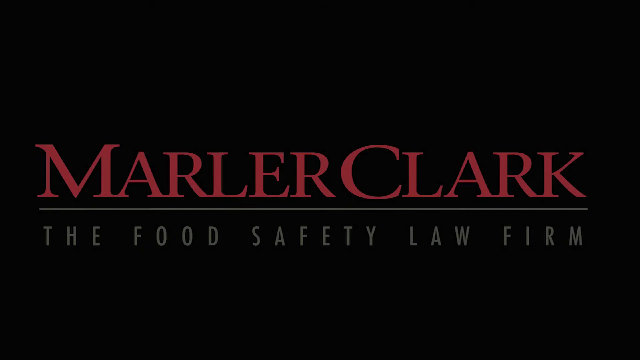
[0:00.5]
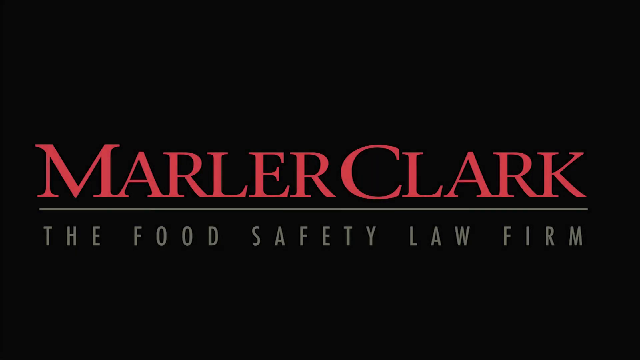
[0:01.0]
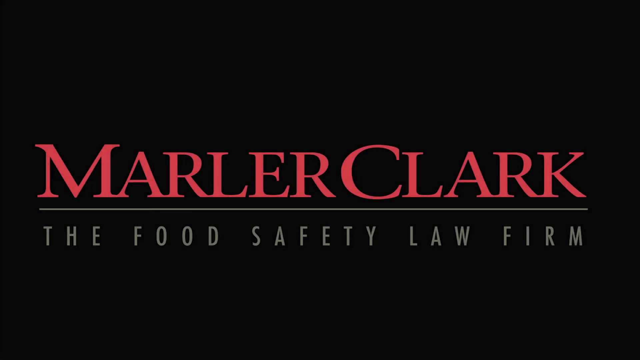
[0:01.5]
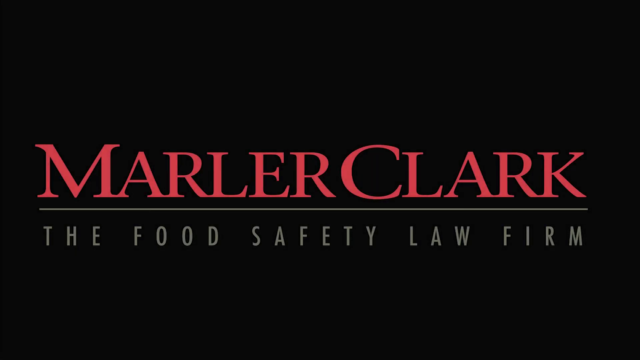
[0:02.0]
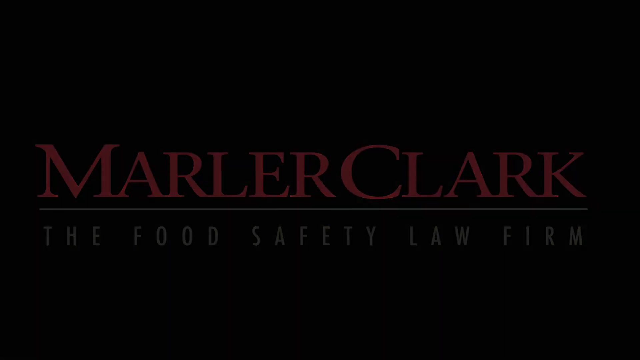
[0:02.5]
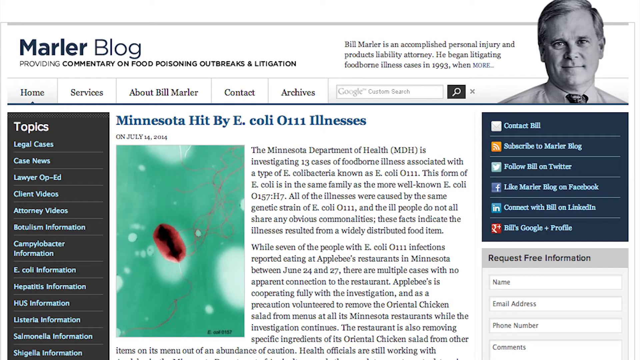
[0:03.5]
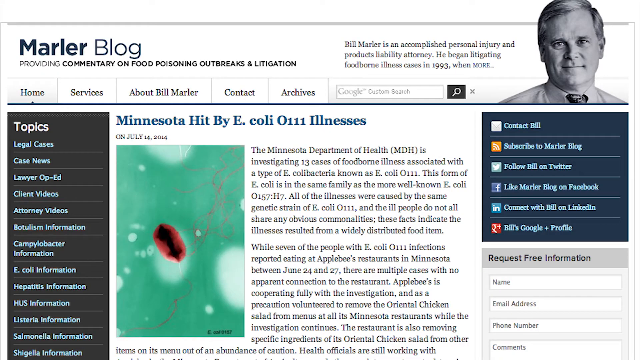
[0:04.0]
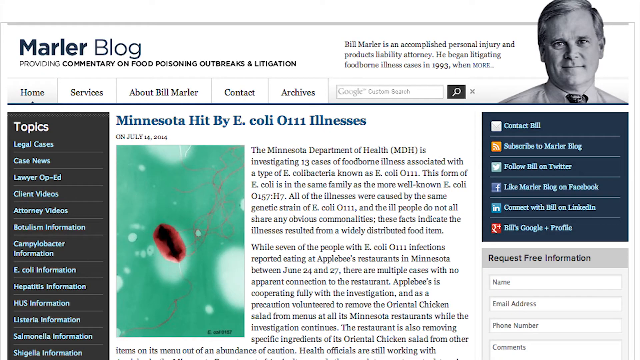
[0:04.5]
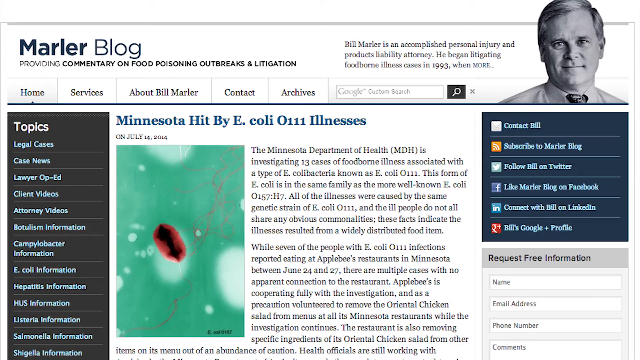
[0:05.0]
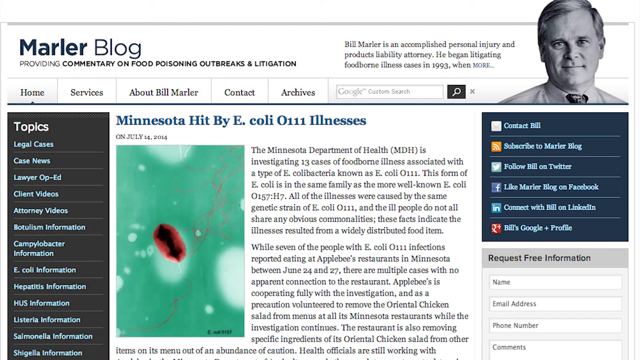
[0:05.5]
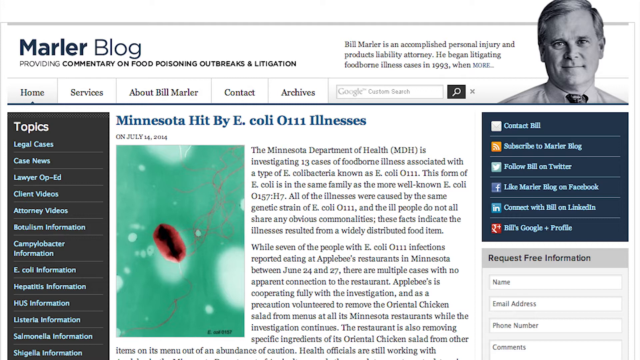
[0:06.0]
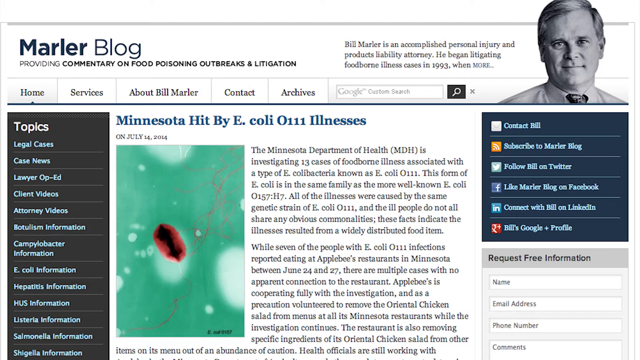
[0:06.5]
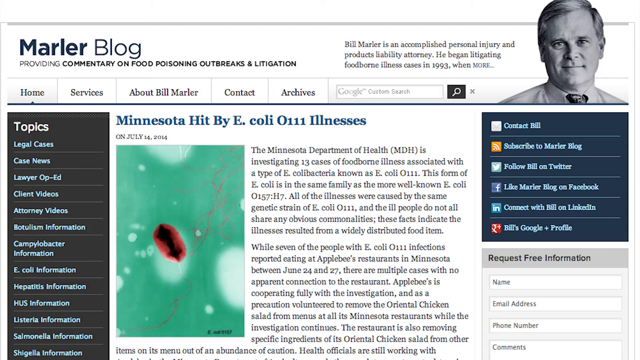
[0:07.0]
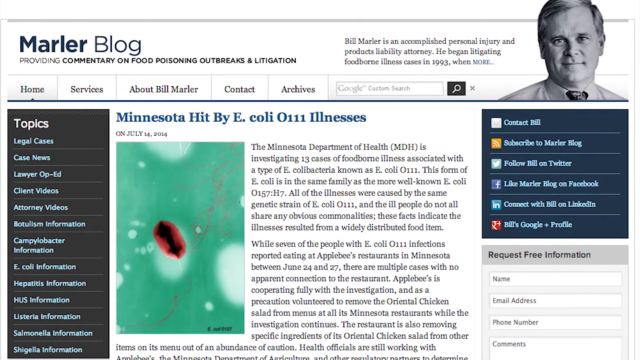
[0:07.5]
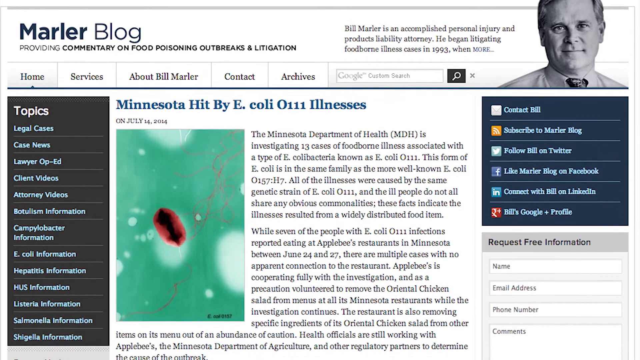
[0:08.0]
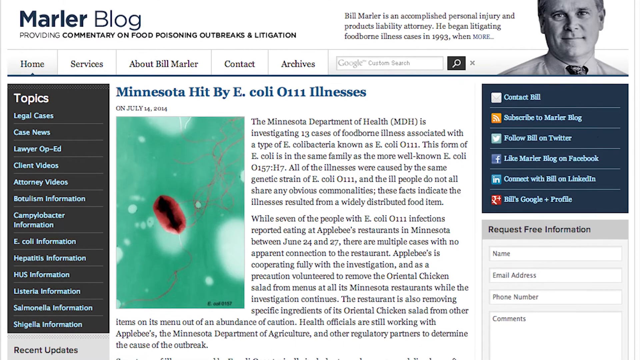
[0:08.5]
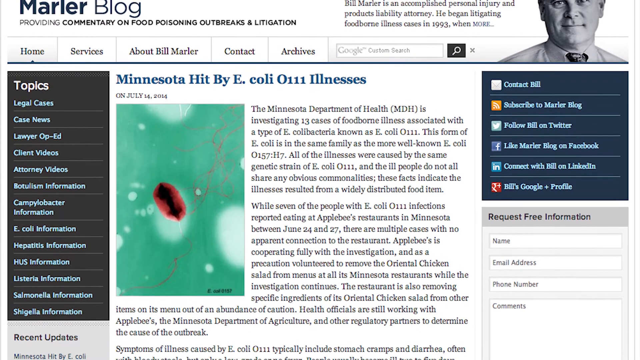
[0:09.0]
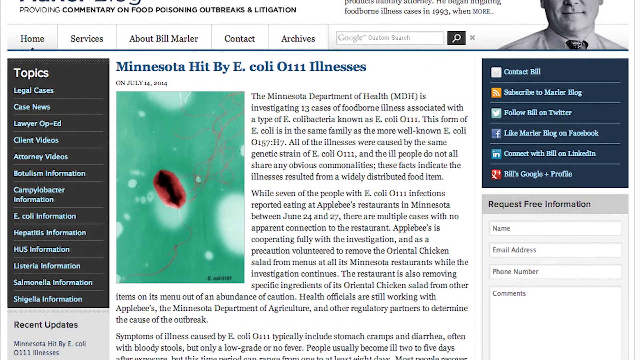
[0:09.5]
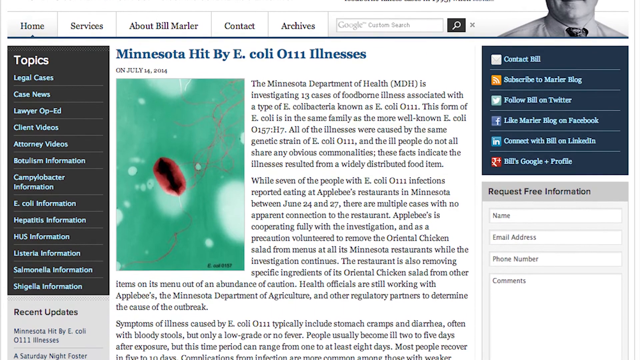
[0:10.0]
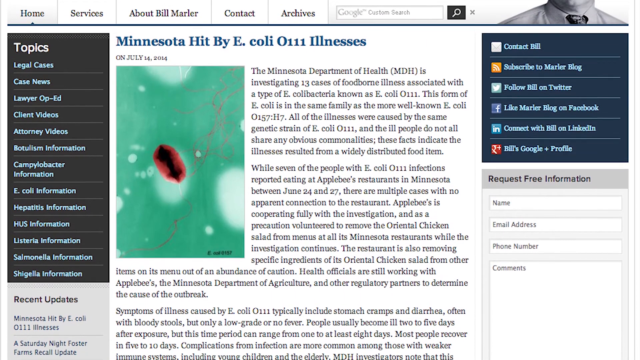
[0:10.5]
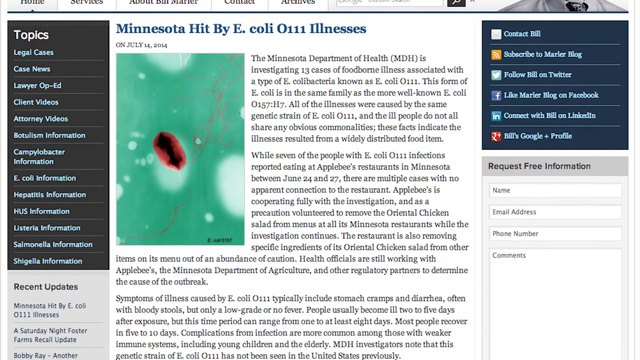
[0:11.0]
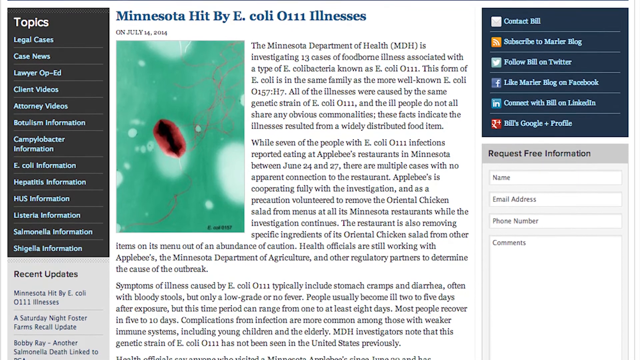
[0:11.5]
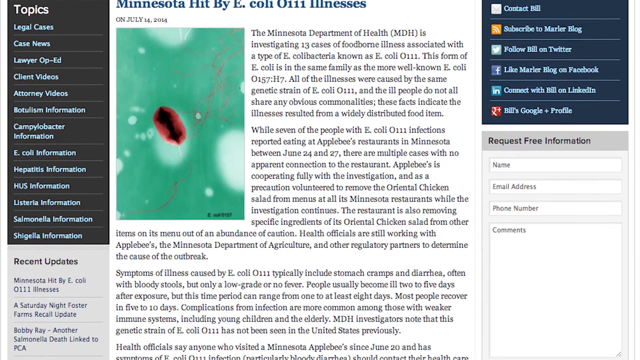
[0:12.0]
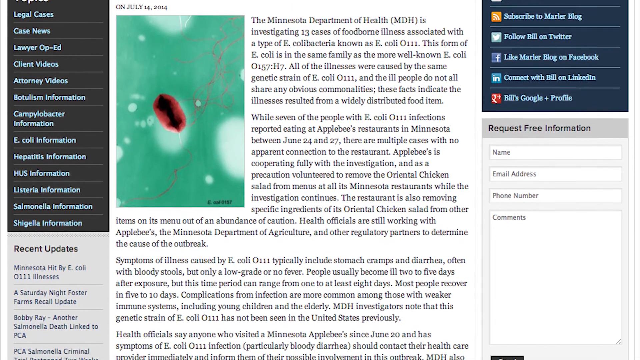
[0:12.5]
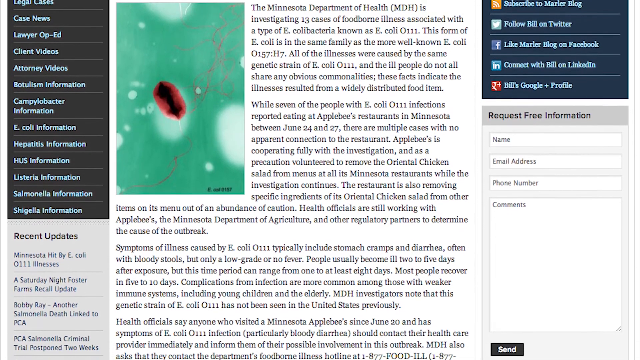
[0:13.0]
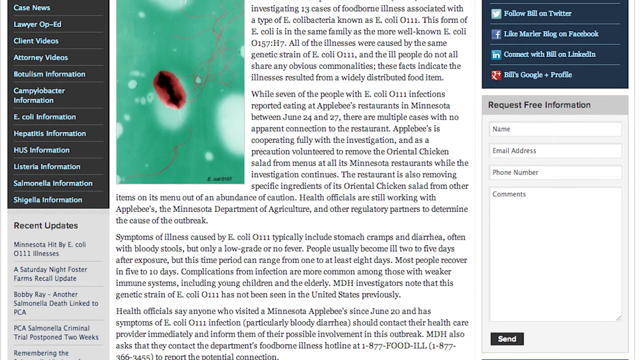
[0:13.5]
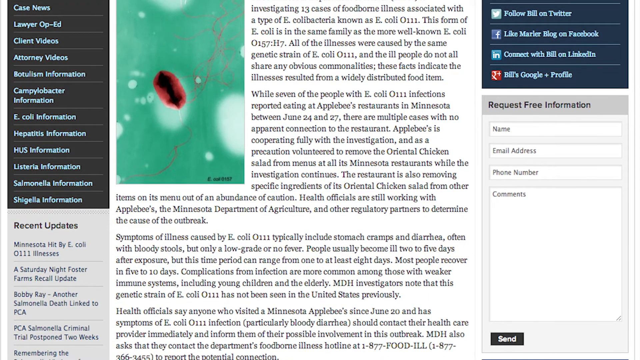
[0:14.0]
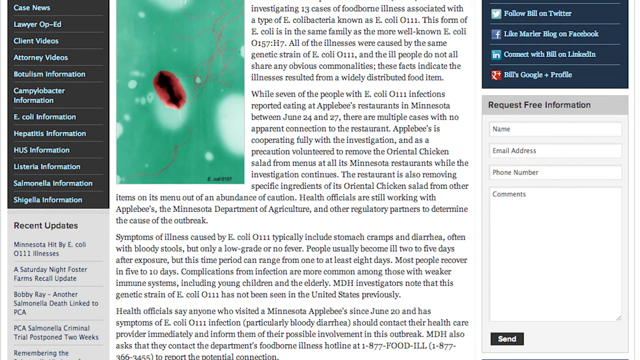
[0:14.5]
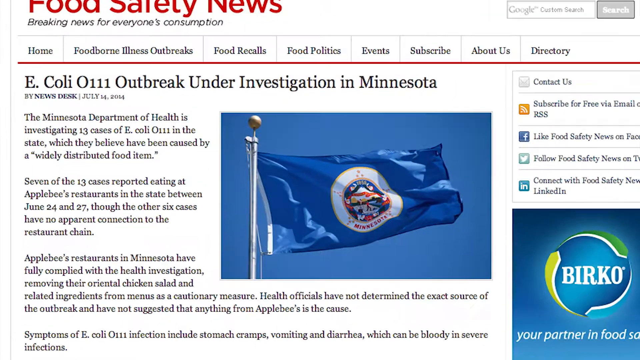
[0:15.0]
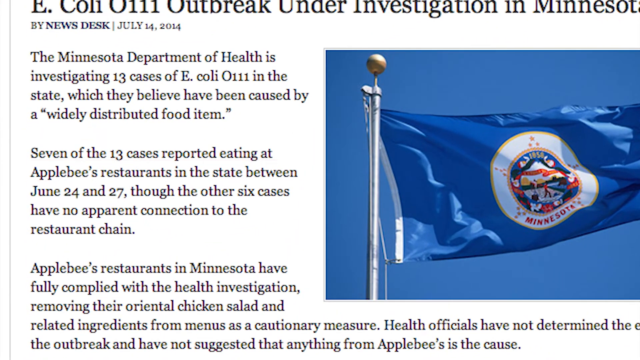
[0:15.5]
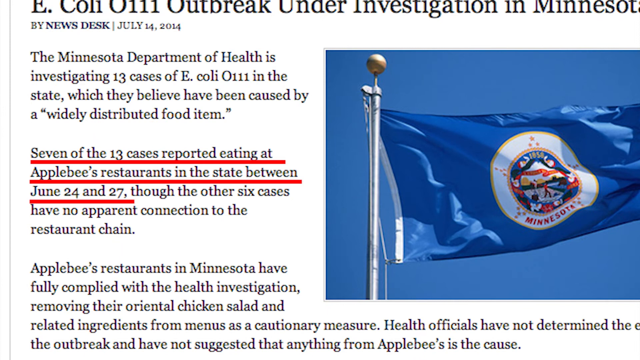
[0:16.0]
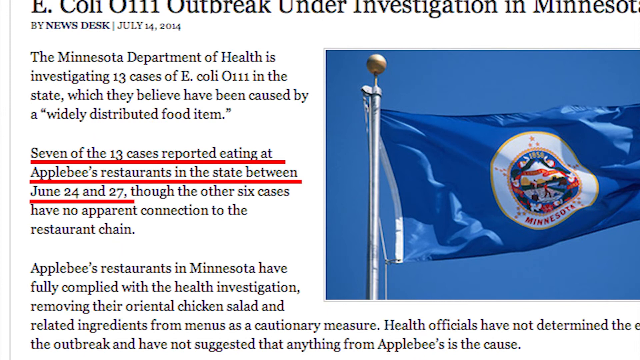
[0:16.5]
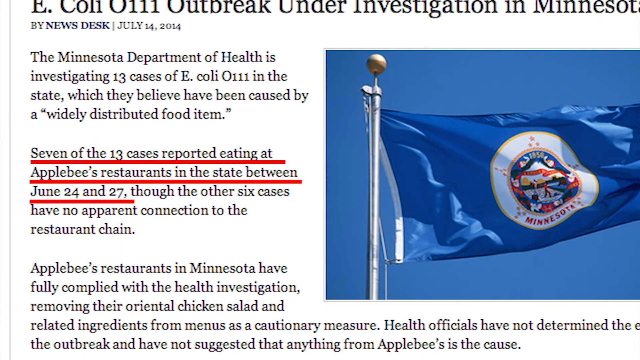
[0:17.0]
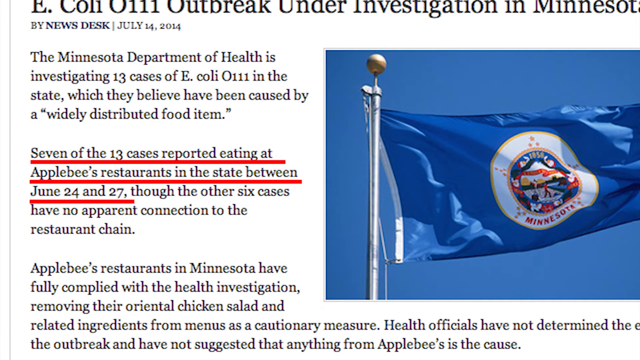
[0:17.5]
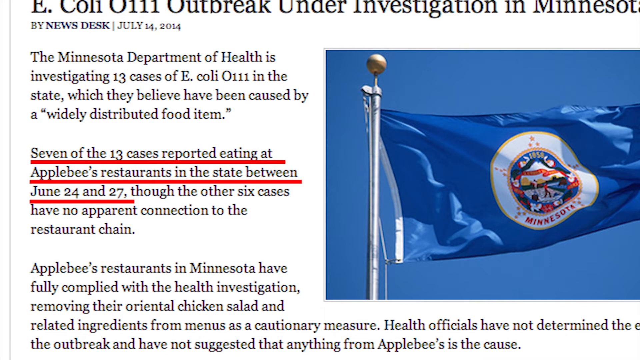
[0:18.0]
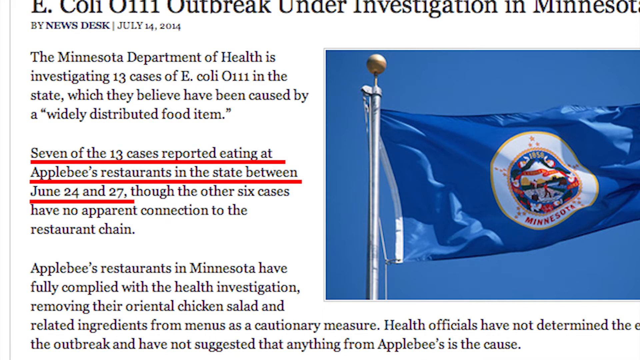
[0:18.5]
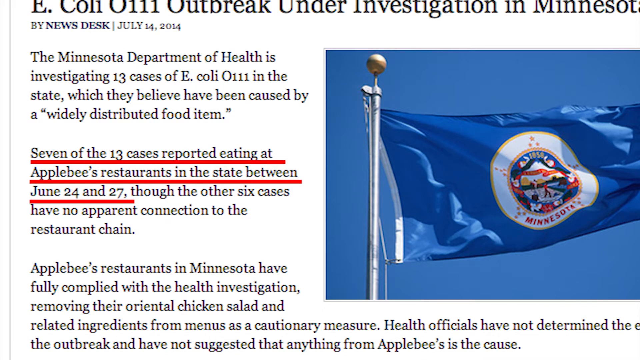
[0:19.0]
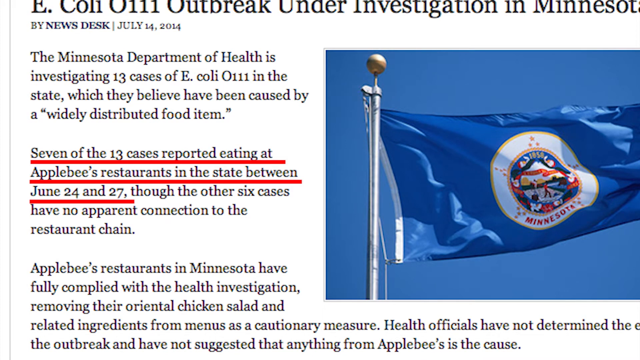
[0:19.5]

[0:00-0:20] A black screen gives way to the "Marler Clark" logo. The M and the C are a little bigger than the other letters, and the letters are scrunched together with hardly any space between them. A faint underline runs beneath the name, and below it, in the same color as the underline, is the text "the food safety law firm," with more space between each word. The video then moves to a website called "the Marler blog," with "commentary on food poisoning outbreaks" underneath. A picture of Bill Marler is on the right. The menu has home, services, about, contact and archives, with a Google search field to the right. A blue box underneath his picture on the right side holds links such as "contact bill" and "subscribe," among a few others. The main article is about Minnesota being hit by E. coli and mentions "0111," apparently the E. coli 0111 illness. The page scrolls down slightly. There is a picture, apparently a microscope view of an E. coli cell, in red and black. Another article about the outbreak, by Newsdesk, follows. The view zooms in as a line of text is underlined in red: "seven of the 13 cases reported eating at Applebee's restaurants in the state between June 24th and 27th."